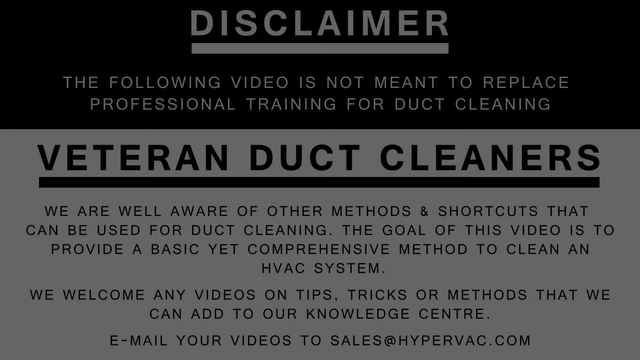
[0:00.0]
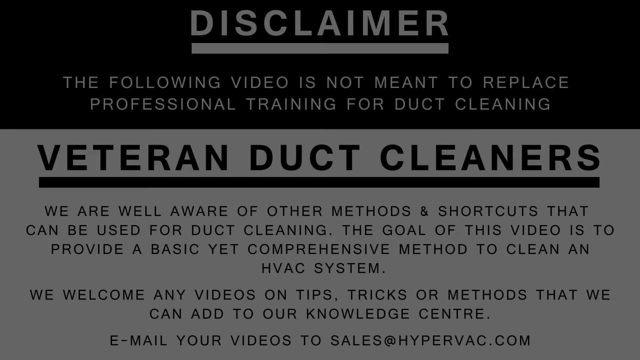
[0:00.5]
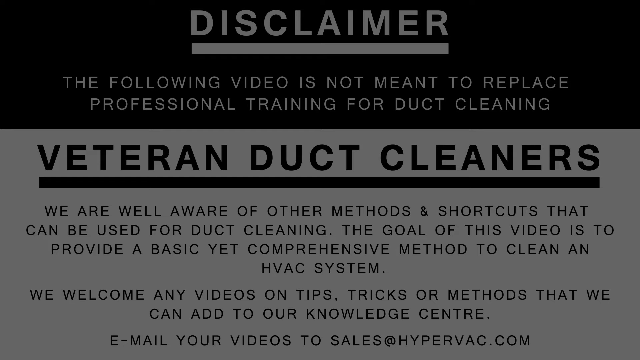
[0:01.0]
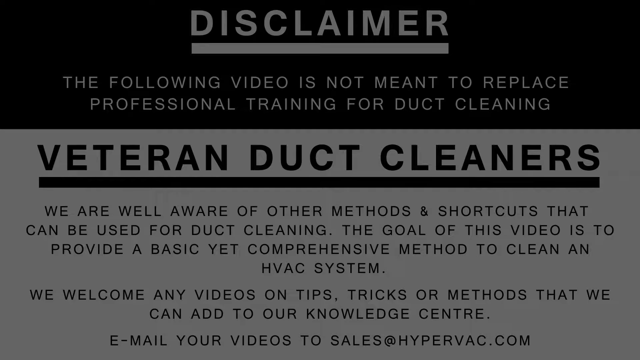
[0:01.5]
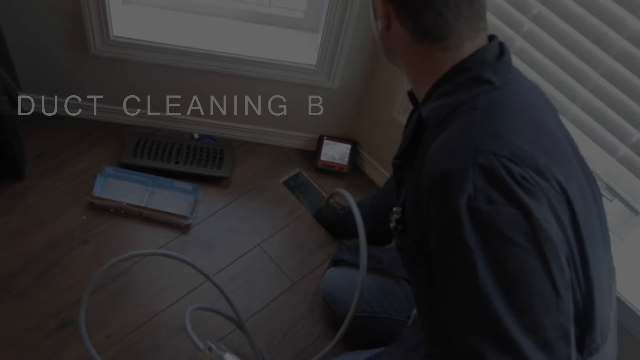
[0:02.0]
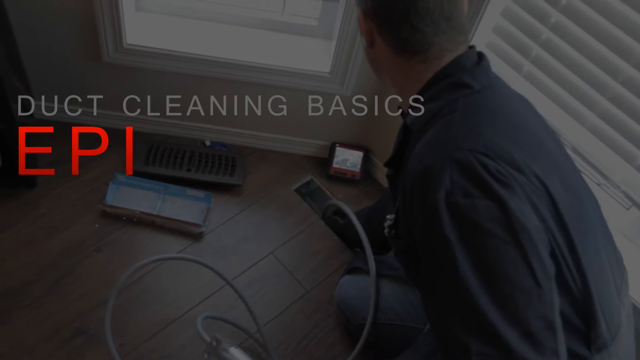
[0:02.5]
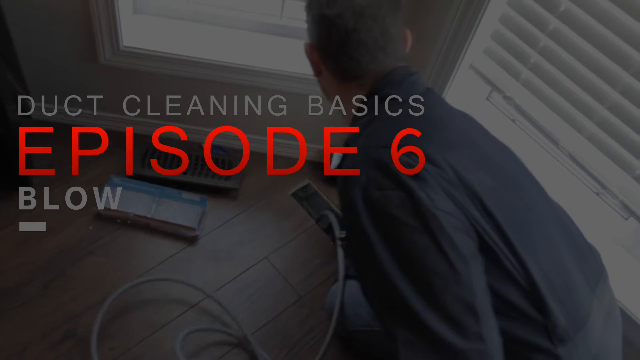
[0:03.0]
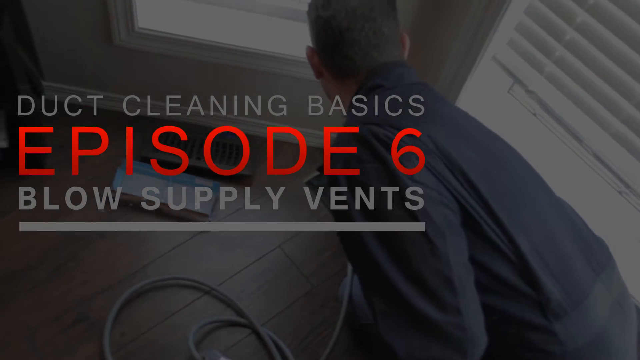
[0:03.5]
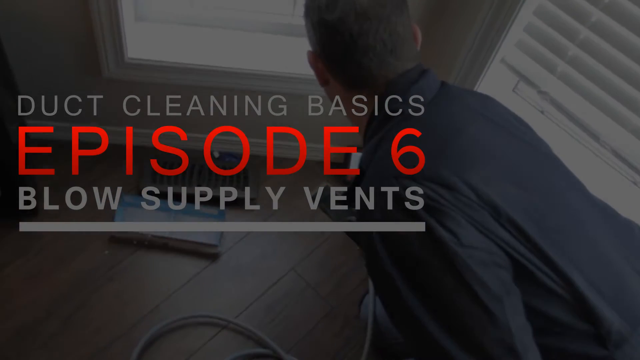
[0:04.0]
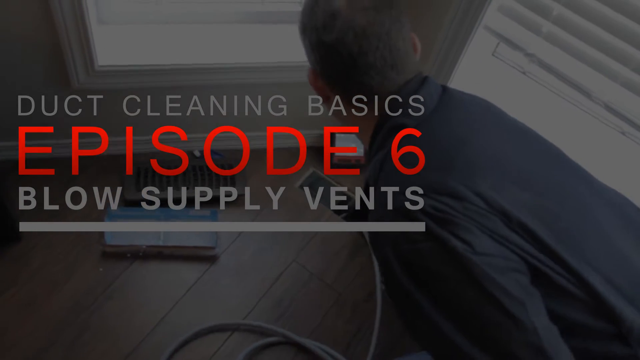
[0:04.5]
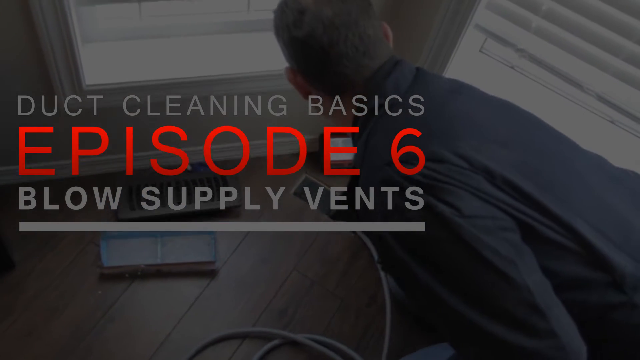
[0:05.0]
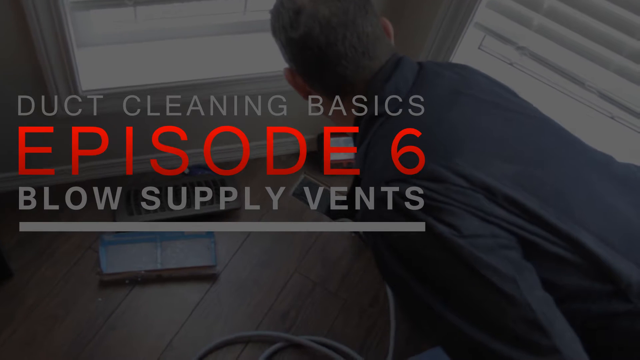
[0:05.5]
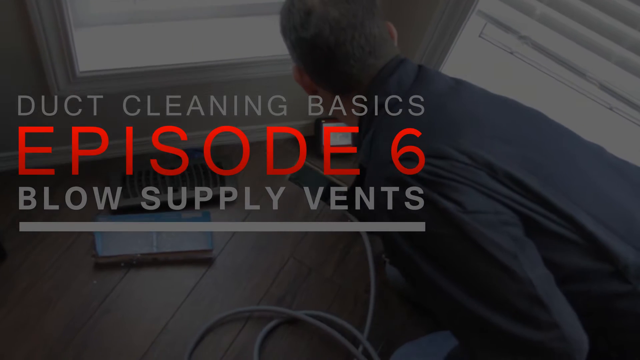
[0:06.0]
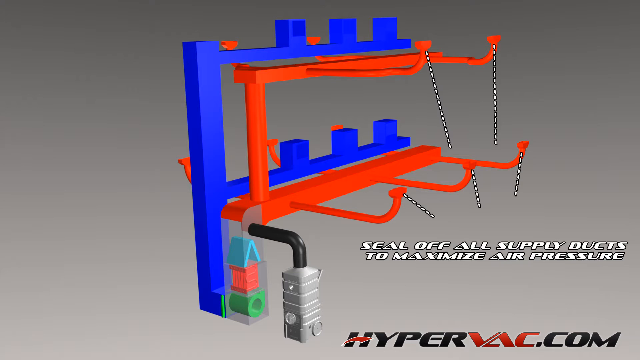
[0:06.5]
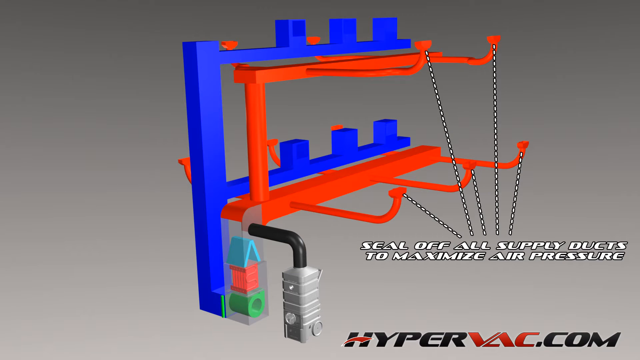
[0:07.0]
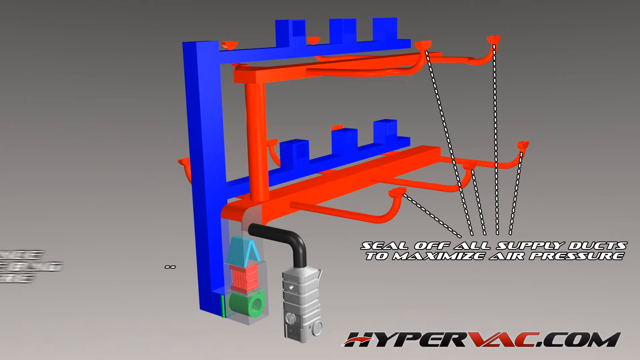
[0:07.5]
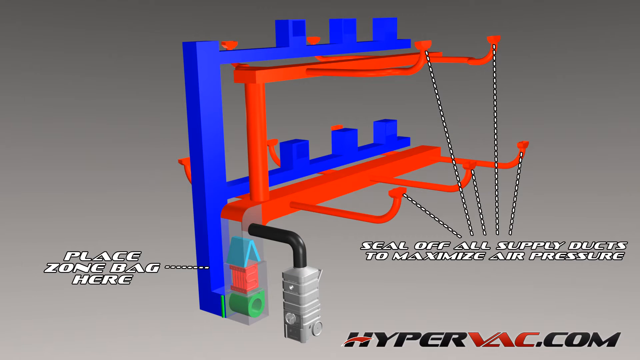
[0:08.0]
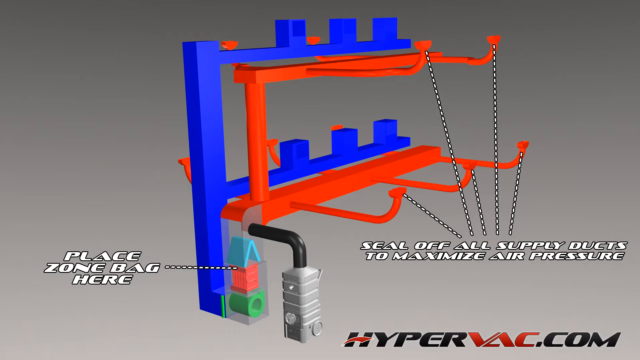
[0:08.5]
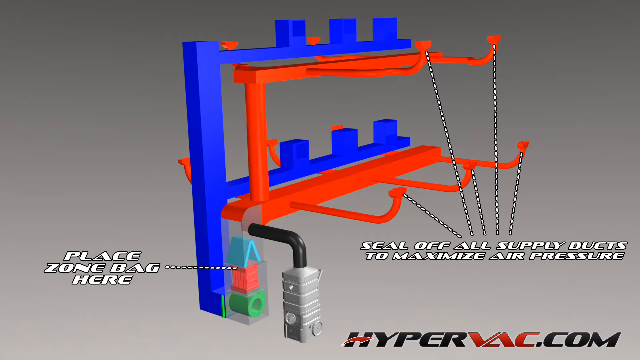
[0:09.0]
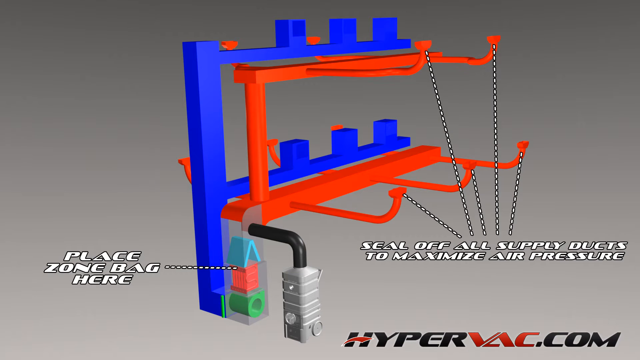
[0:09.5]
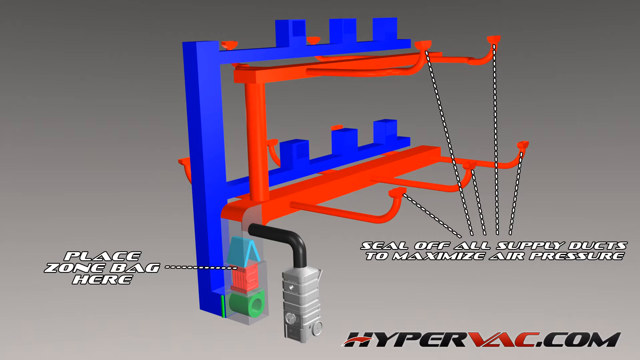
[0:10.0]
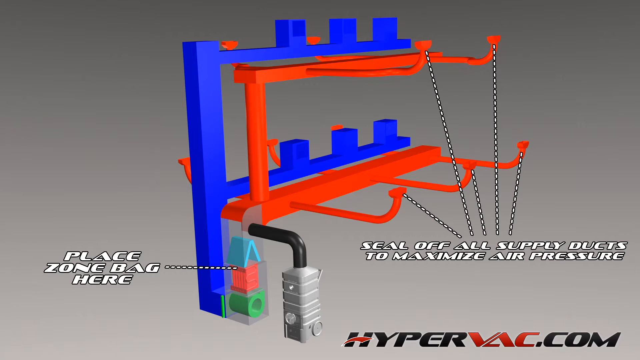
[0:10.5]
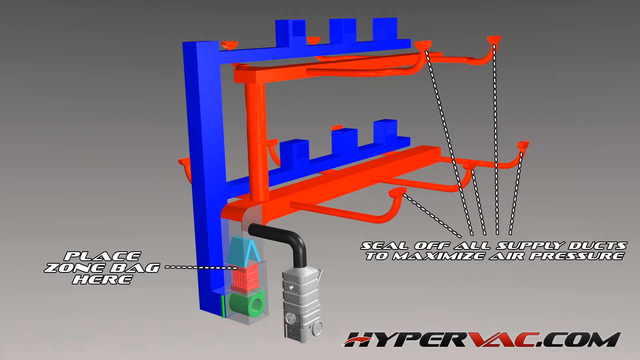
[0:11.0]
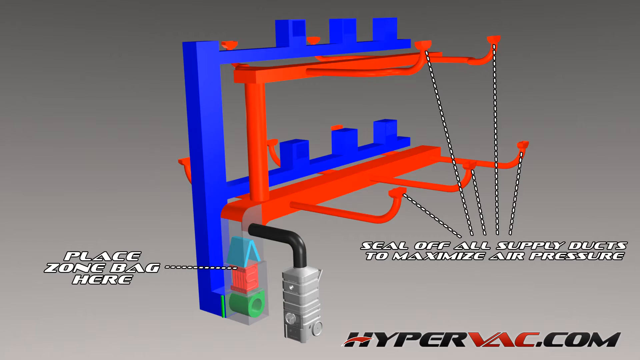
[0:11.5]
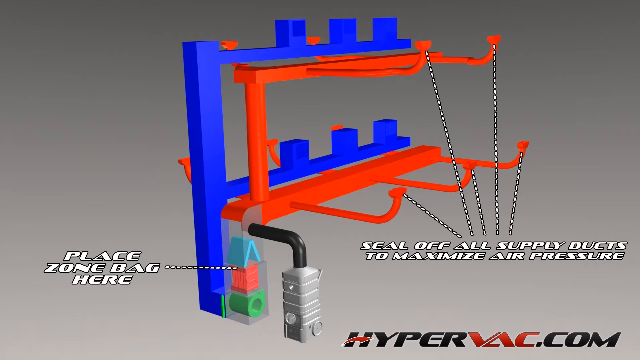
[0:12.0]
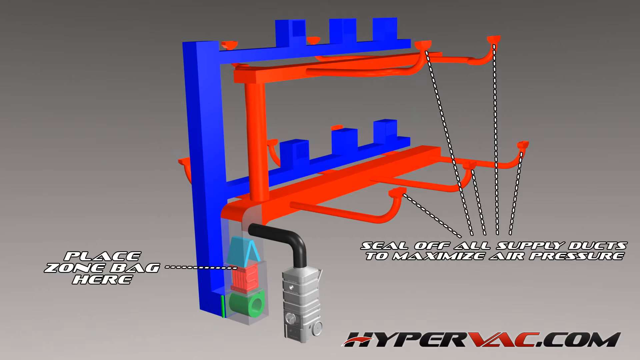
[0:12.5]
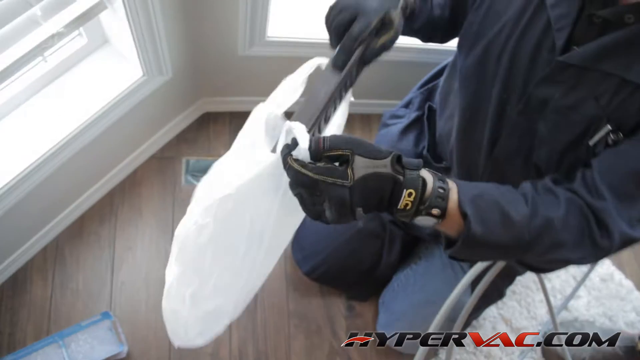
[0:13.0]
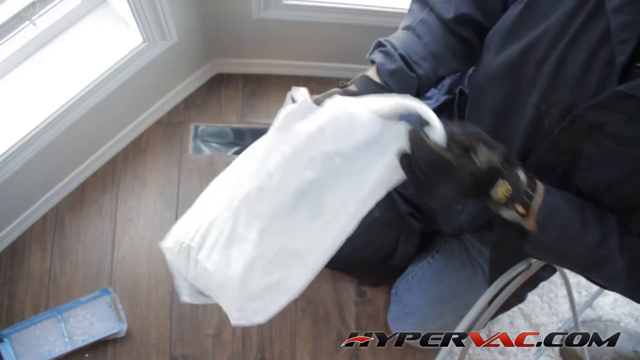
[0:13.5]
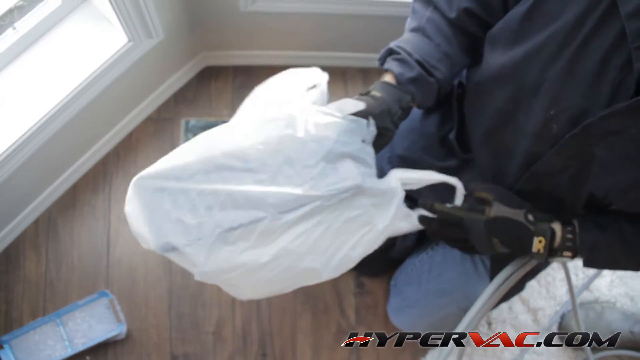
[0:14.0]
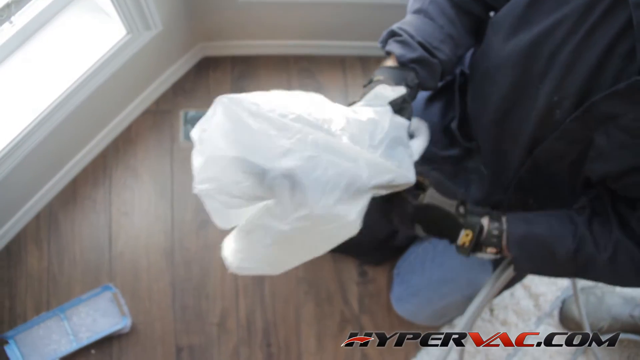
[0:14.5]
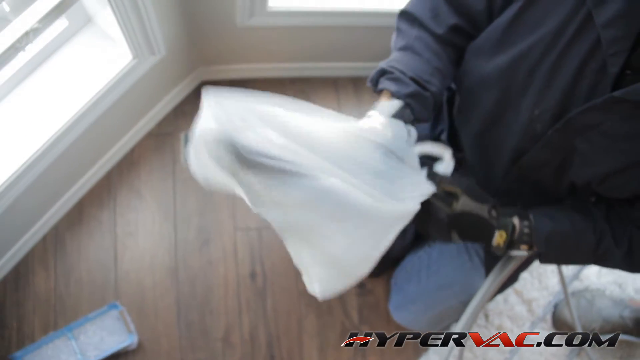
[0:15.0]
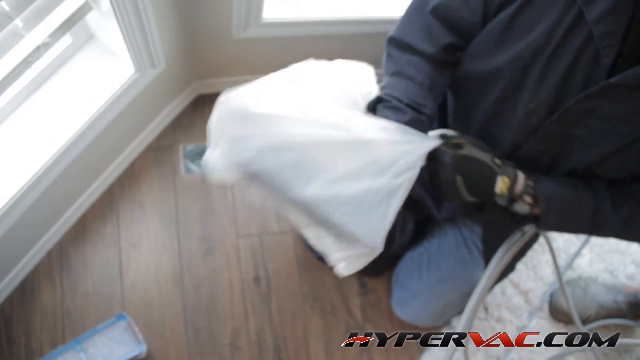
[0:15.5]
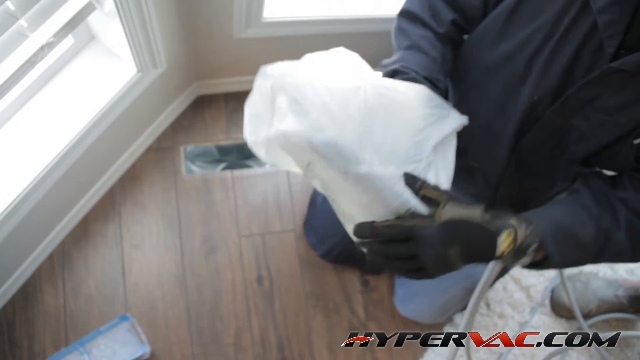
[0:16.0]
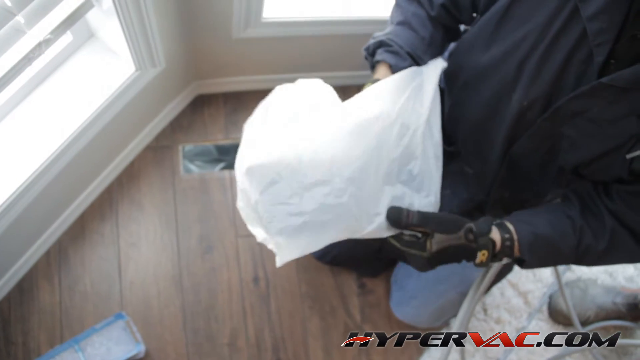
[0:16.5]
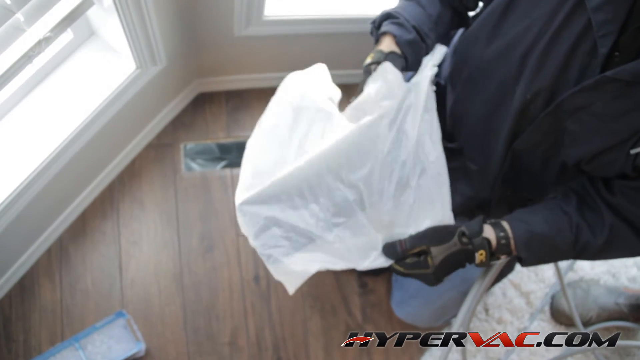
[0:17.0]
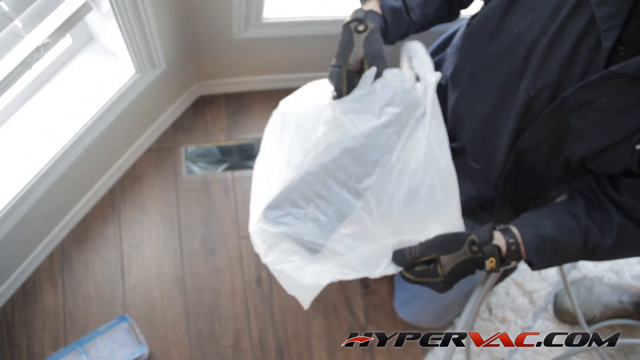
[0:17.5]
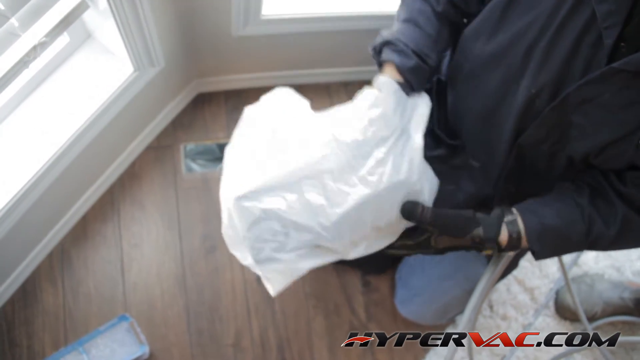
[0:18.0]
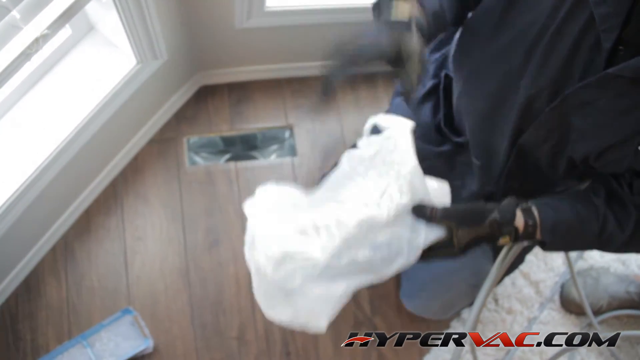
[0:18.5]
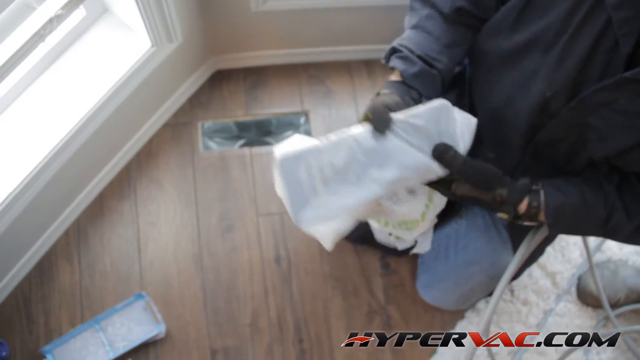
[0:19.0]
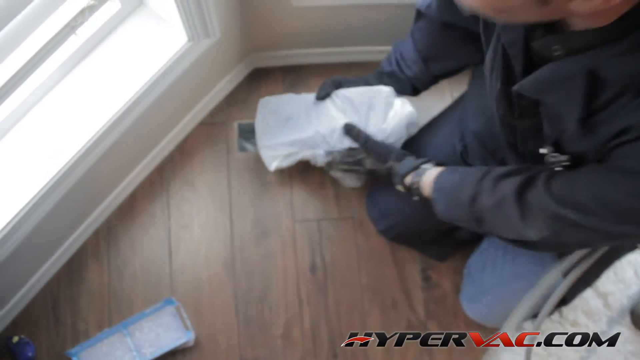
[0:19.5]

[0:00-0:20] The video opens on an image of a piece of paper that reads: "disclaimer, the following video is not meant to replace professional training for duct cleaning. Veteran duct cleaners, we are well aware of other methods and shortcuts that can be used for duct cleaning. The goal of this video is to provide a basic yet comprehensive method to clean an HVAC system. We welcome any videos on tips, tricks, or methods that we can add to our knowledge center." It then cuts to a person working inside a house, with text in the middle of the screen reading "duct cleaning basics, episode six, blow supply vents." Next comes a blue and red animation; text on the bottom left says "place sewn bag here," and text on the right says "seal off all supply ducts to maximize air pressure."